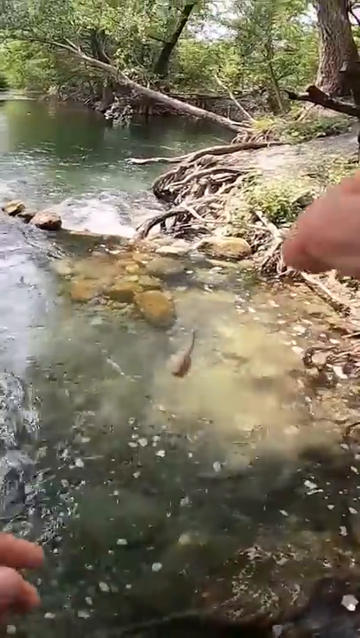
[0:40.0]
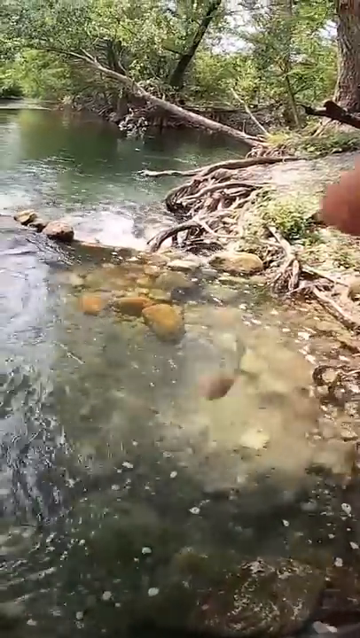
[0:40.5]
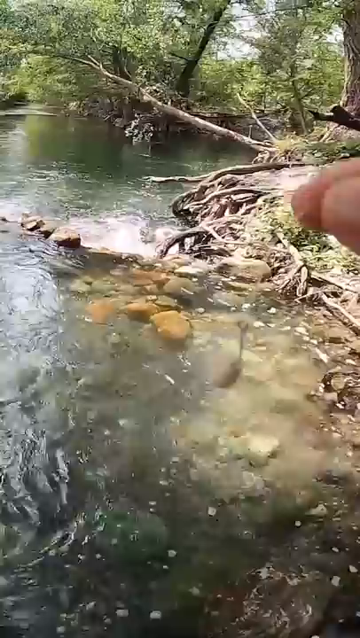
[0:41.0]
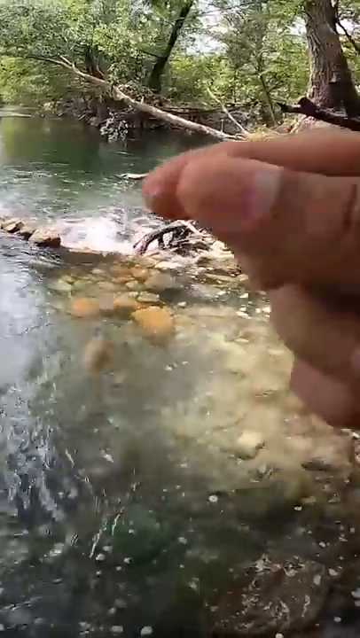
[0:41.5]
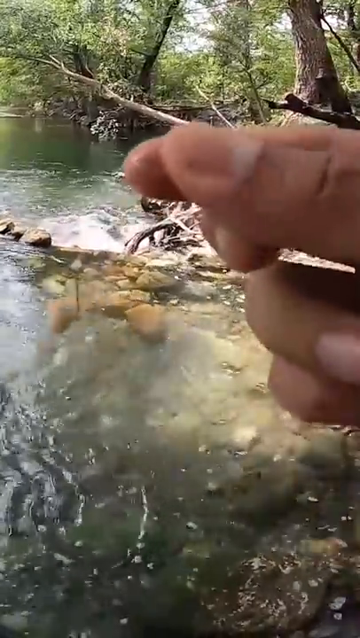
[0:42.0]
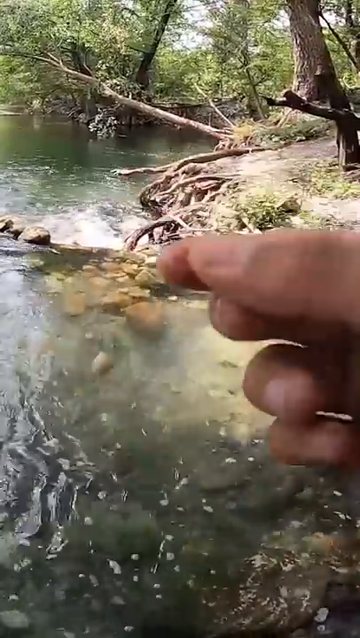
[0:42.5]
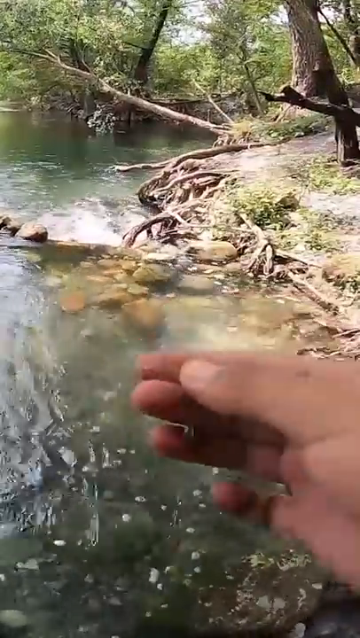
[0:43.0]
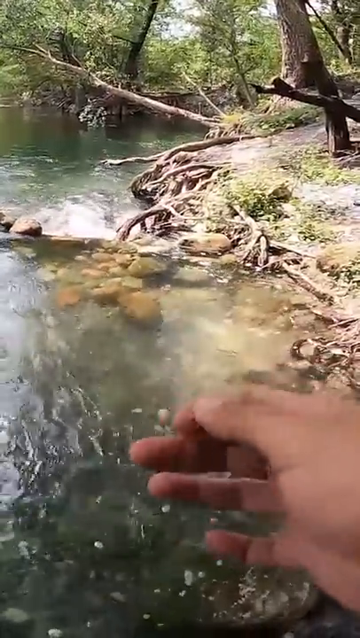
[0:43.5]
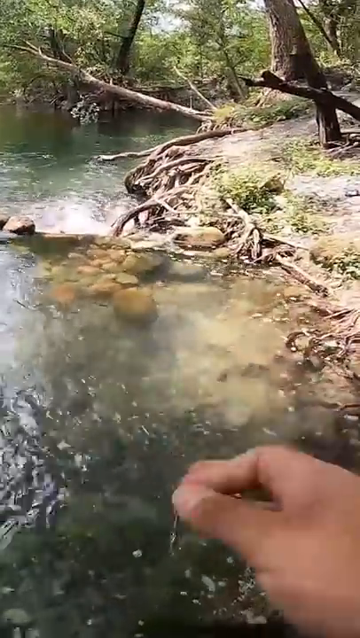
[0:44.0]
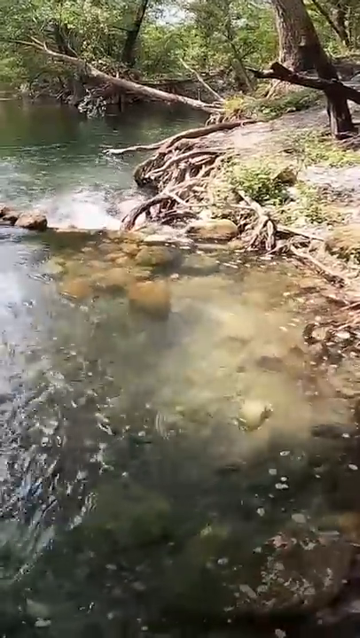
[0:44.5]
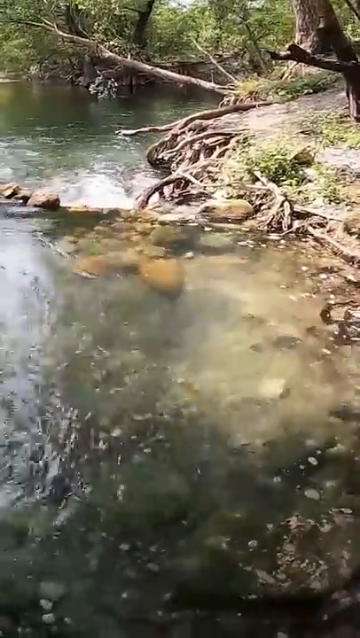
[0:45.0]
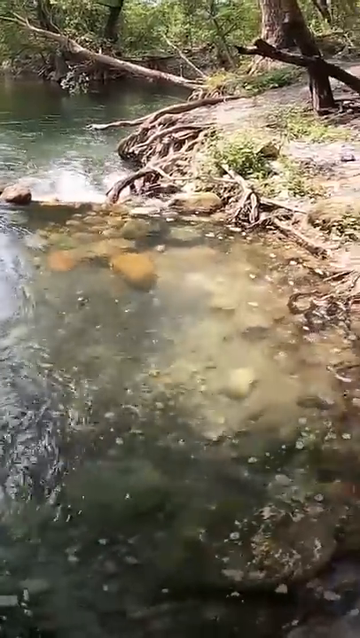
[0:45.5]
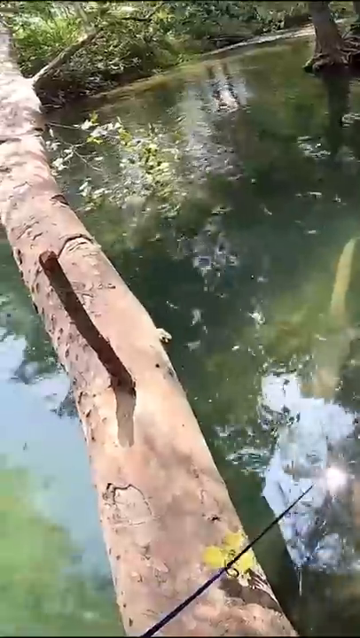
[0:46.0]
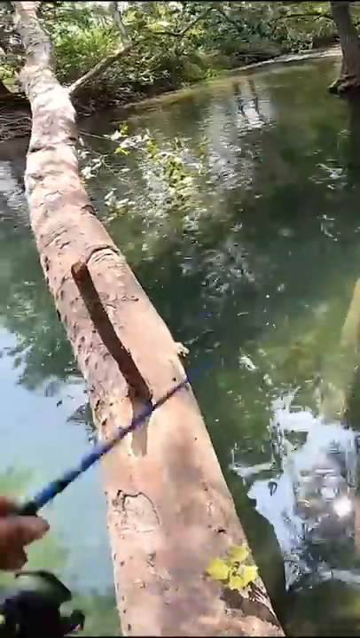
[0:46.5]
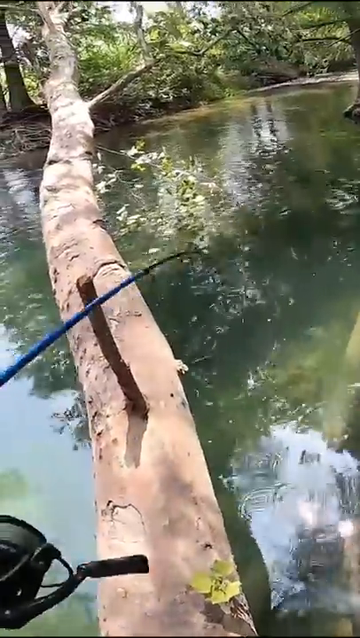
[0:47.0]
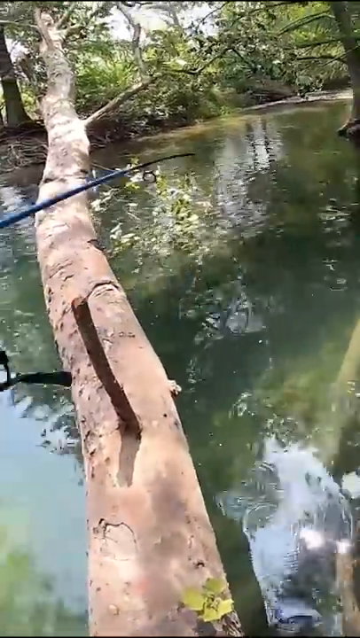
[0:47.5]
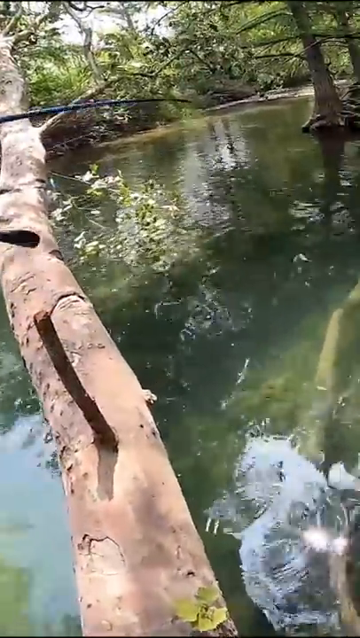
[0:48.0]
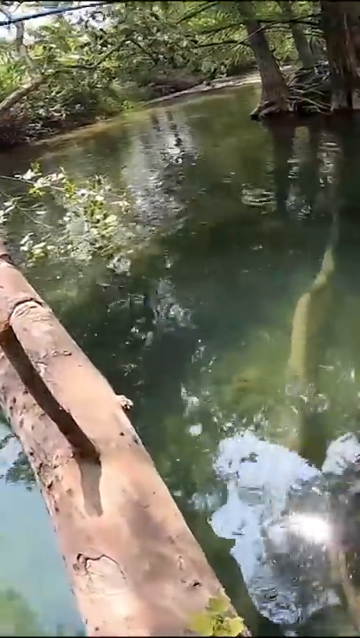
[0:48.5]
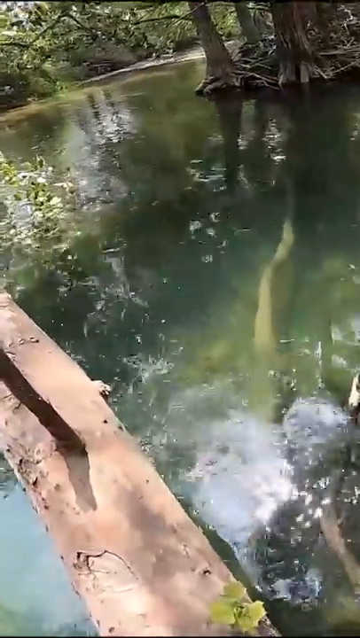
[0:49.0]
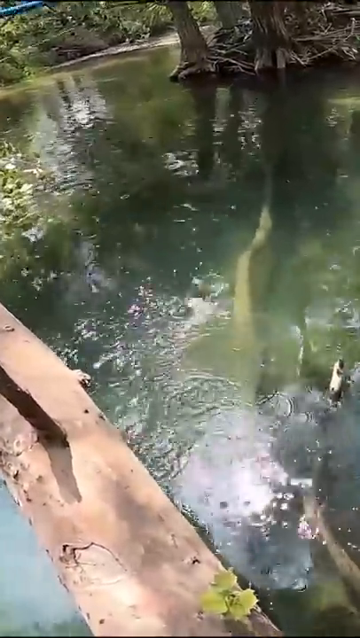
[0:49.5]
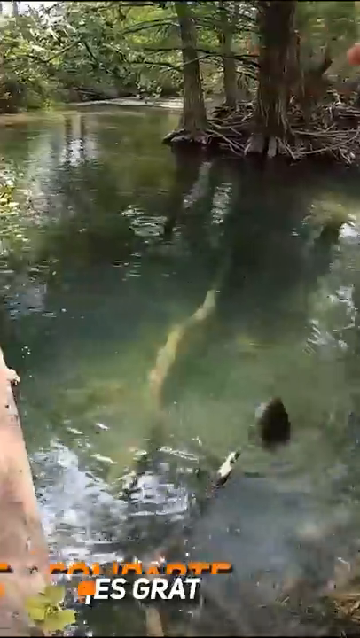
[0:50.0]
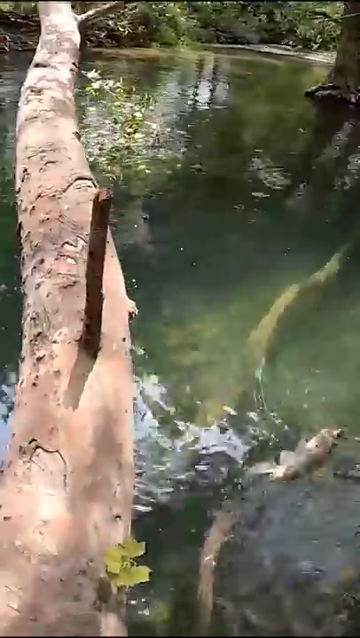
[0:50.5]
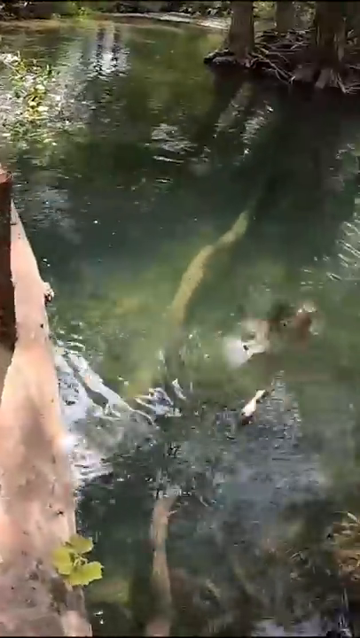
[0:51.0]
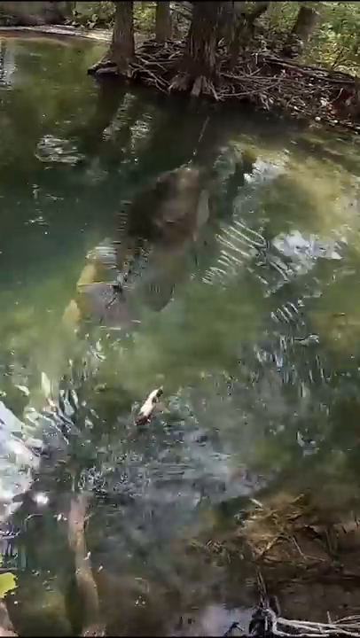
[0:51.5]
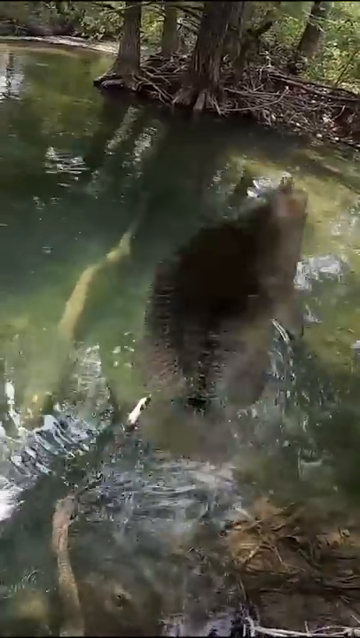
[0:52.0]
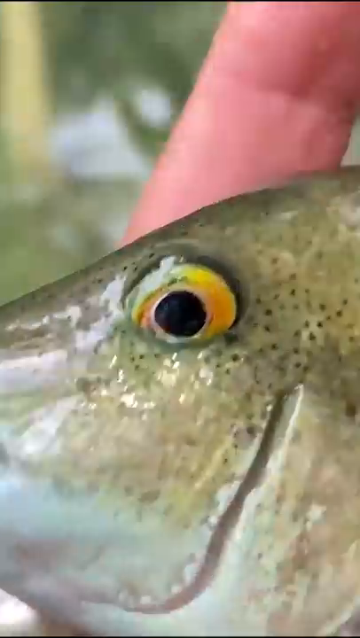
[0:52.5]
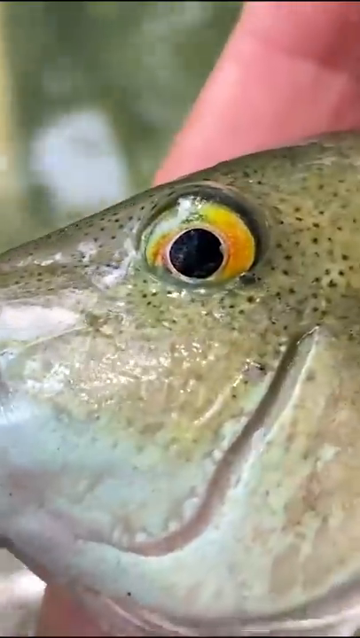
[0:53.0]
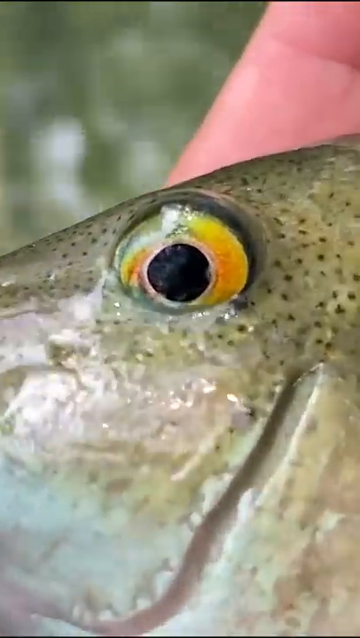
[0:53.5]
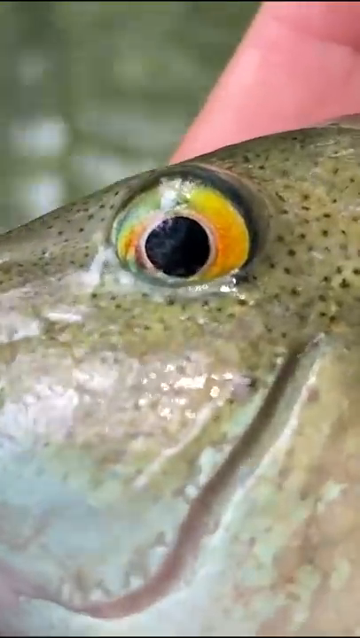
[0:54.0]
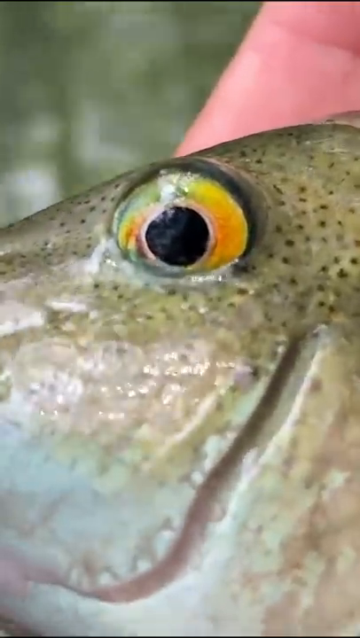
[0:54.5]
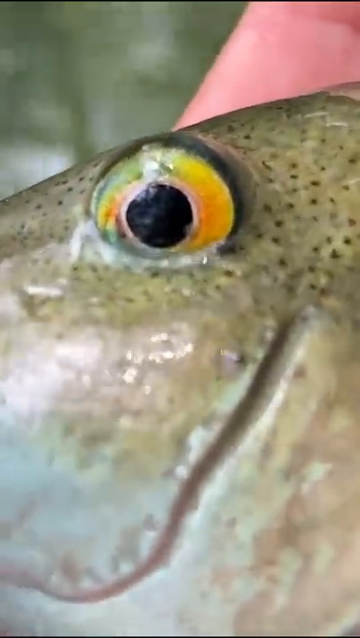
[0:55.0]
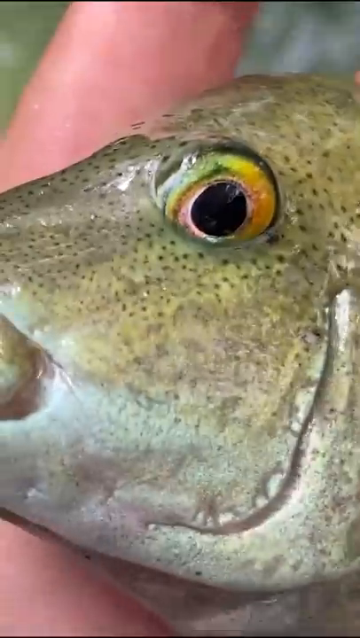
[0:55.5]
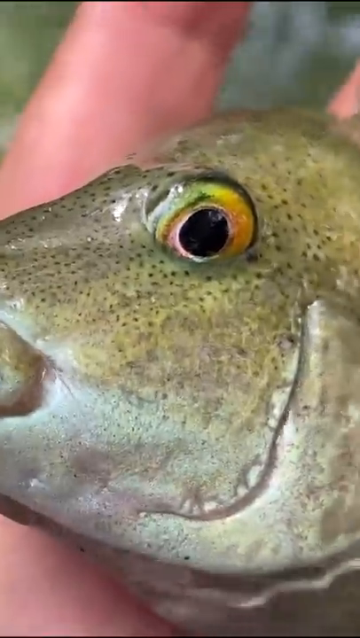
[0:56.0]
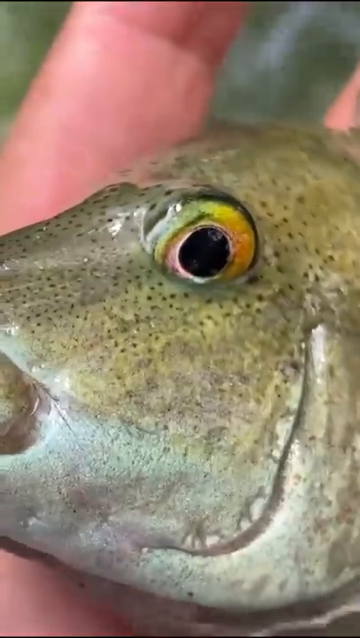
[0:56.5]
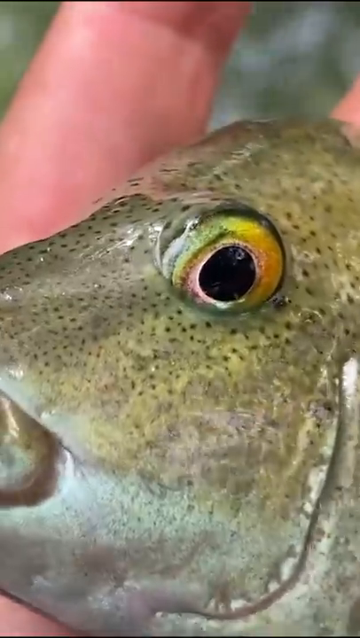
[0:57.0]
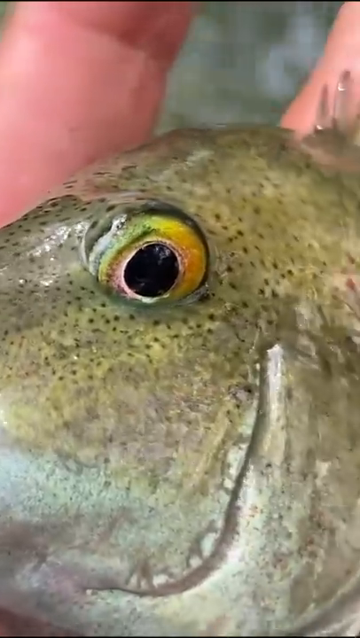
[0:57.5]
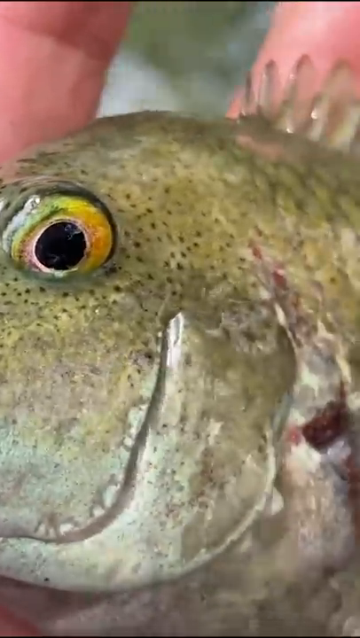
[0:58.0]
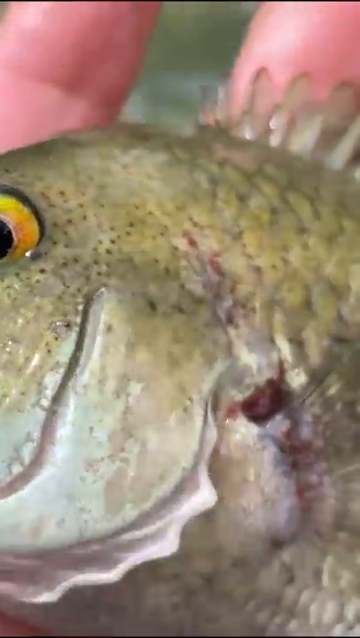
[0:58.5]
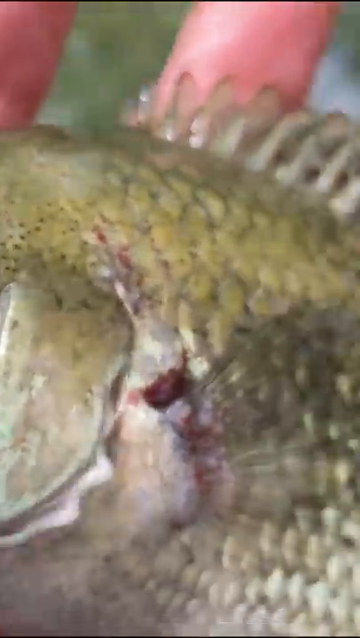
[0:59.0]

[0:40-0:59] The person swings the hook with the bit of bread, and suddenly the scene is a different part of the pool, with a log across it. They throw the hook in the water and then have a fish: a big, green, spotted fish with a big yellow-orange eye that looks pretty heavy. It pulls pretty hard on the line as they pull it up. The fish is flapping and has a lot of fins, sort of pointy fins on its back. Its gills are flapping as it comes out, so it is still alive. It is really big. As the fish is pulled out, some words flash on the screen too quickly to read, possibly starting with an S, maybe "es grande."